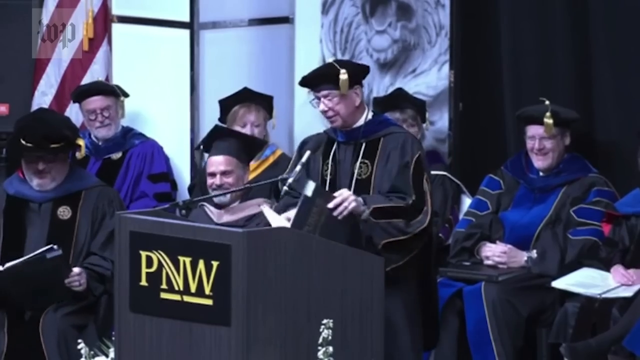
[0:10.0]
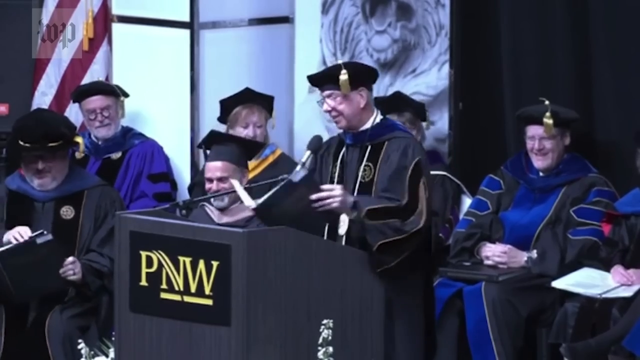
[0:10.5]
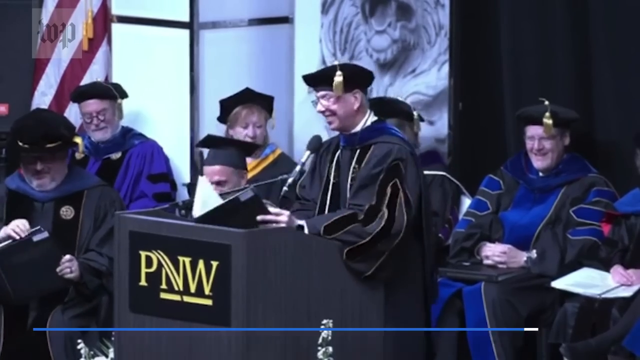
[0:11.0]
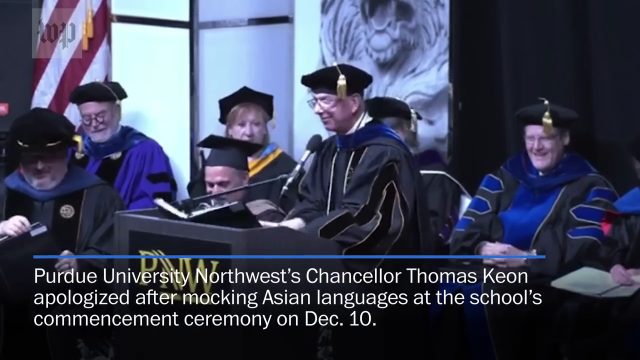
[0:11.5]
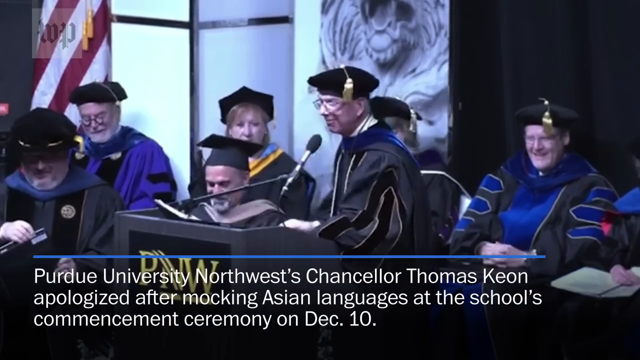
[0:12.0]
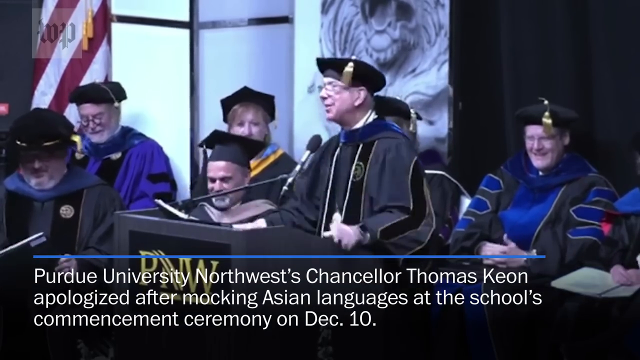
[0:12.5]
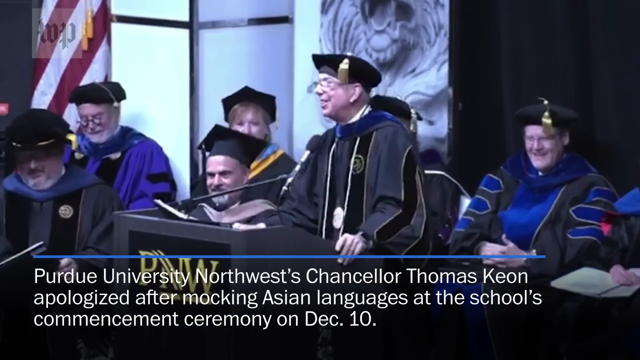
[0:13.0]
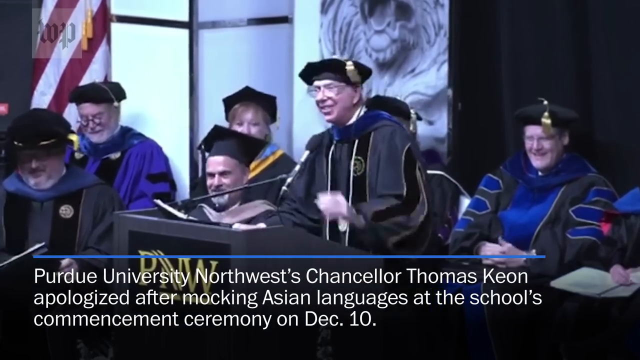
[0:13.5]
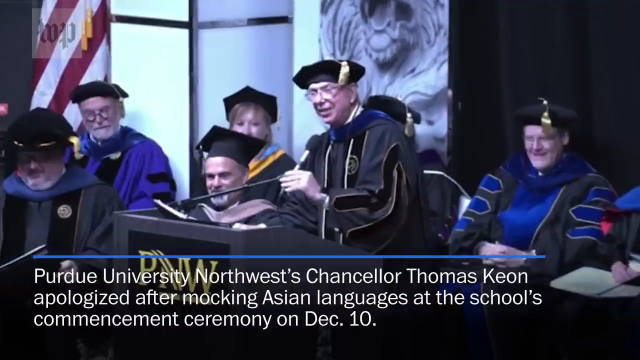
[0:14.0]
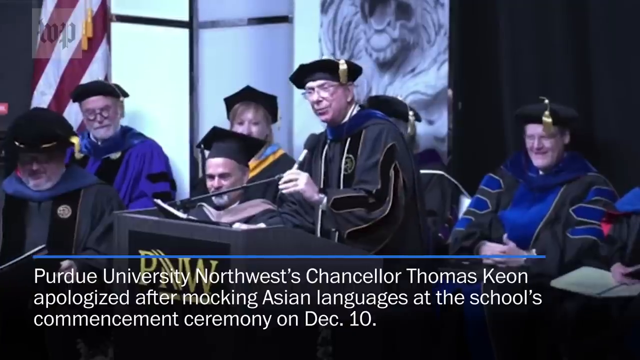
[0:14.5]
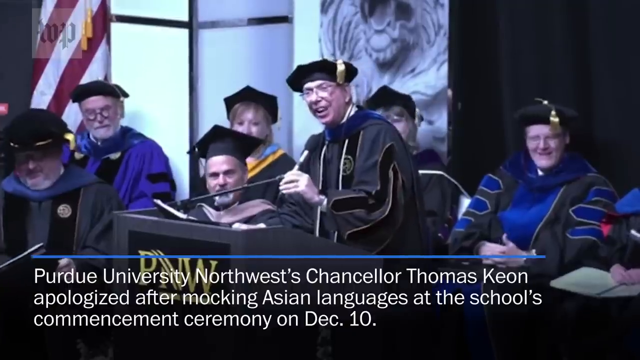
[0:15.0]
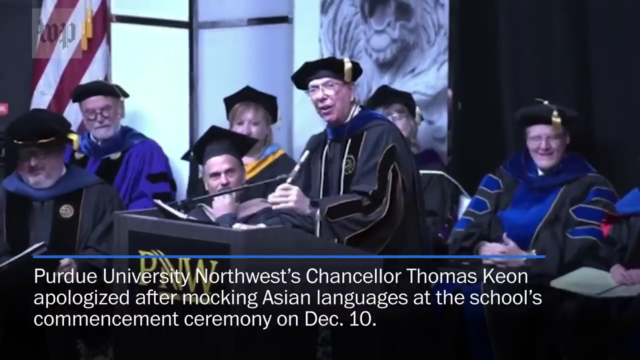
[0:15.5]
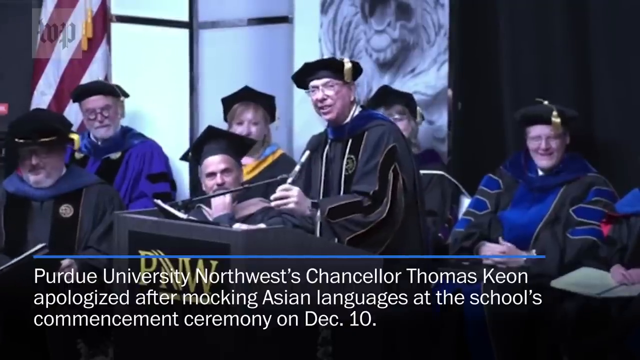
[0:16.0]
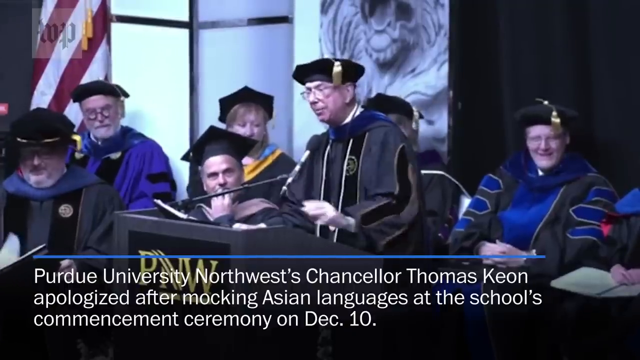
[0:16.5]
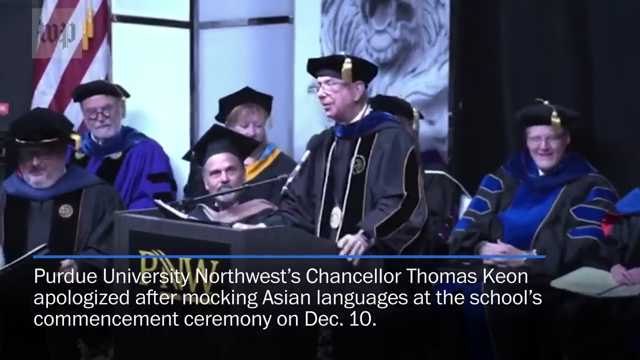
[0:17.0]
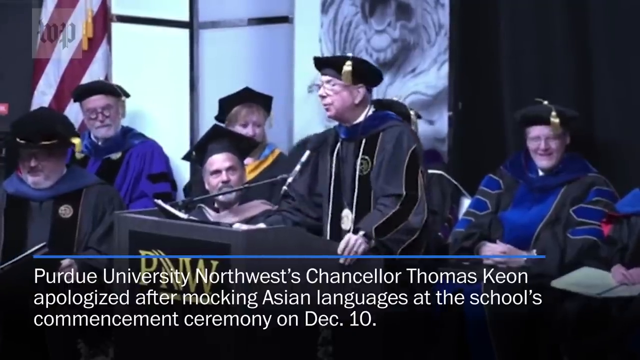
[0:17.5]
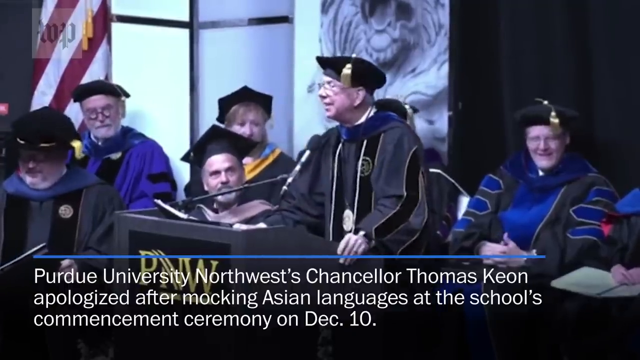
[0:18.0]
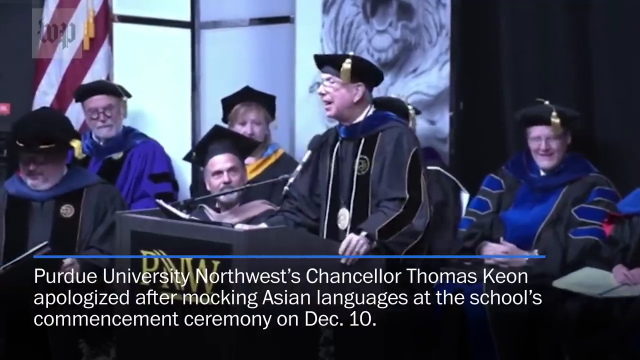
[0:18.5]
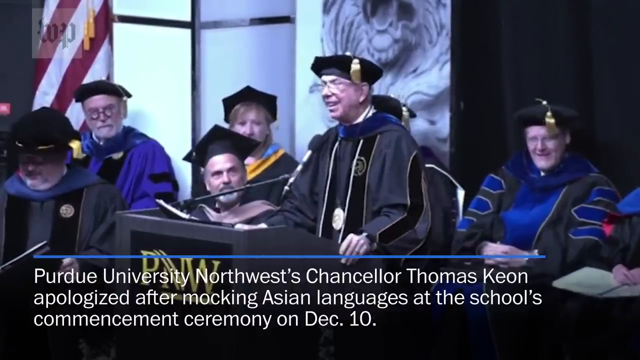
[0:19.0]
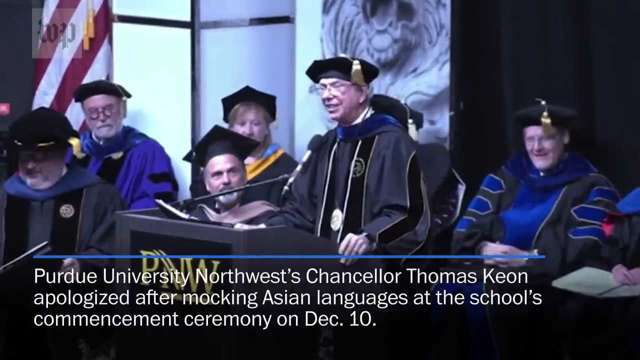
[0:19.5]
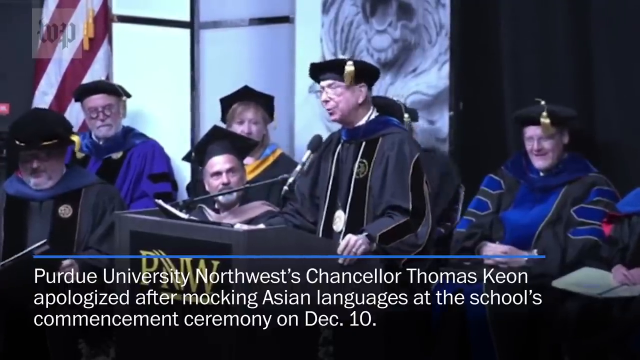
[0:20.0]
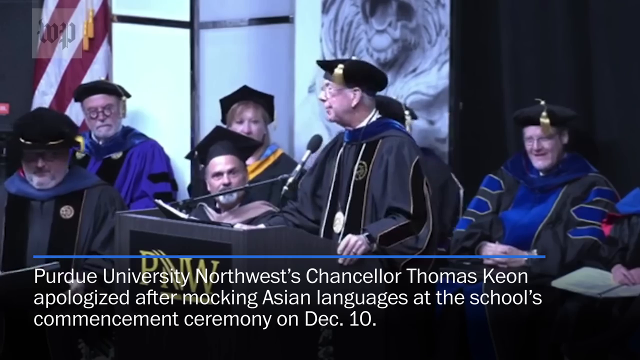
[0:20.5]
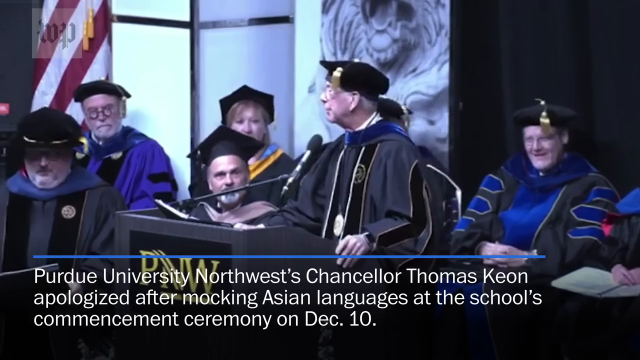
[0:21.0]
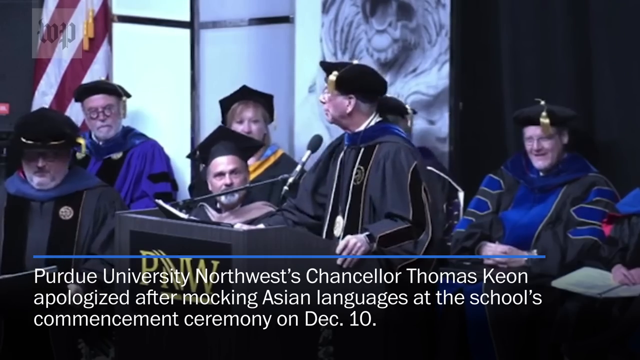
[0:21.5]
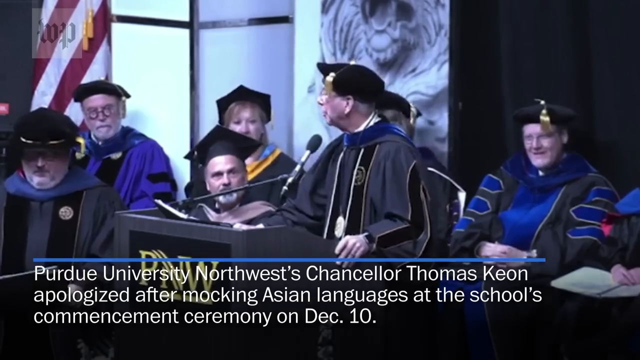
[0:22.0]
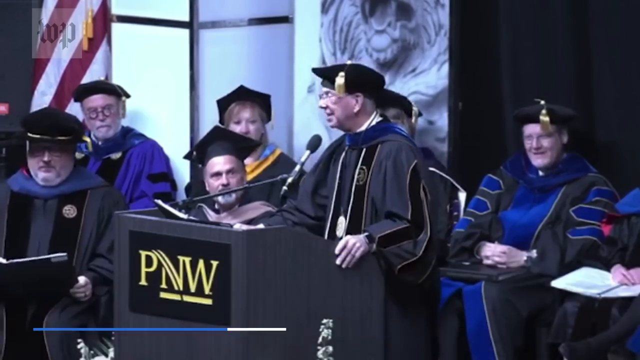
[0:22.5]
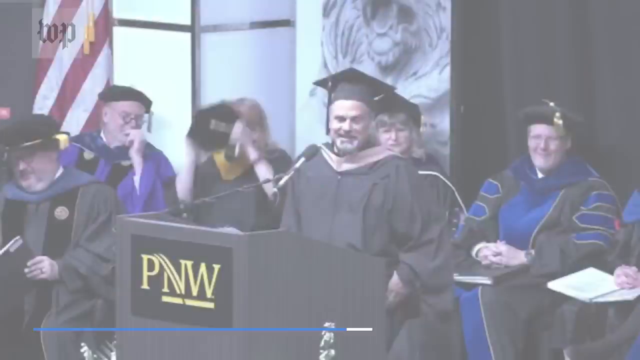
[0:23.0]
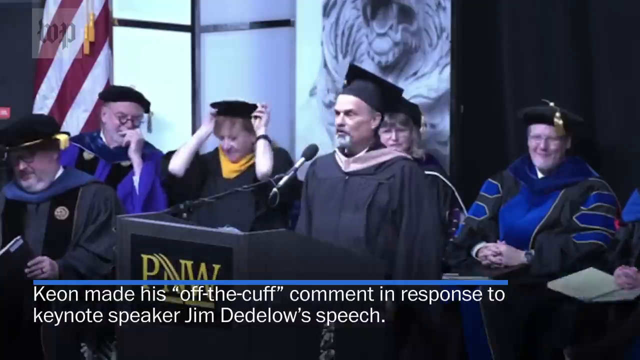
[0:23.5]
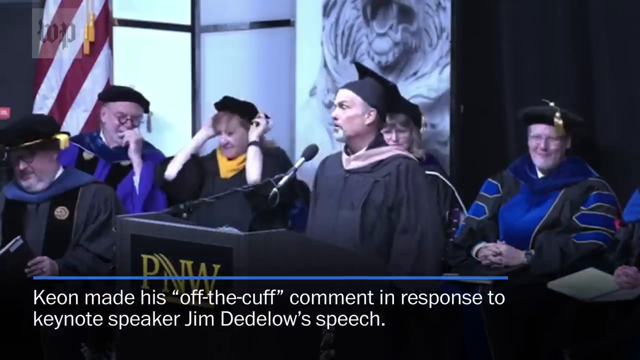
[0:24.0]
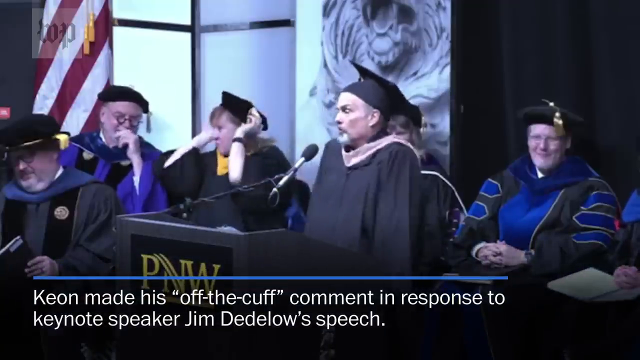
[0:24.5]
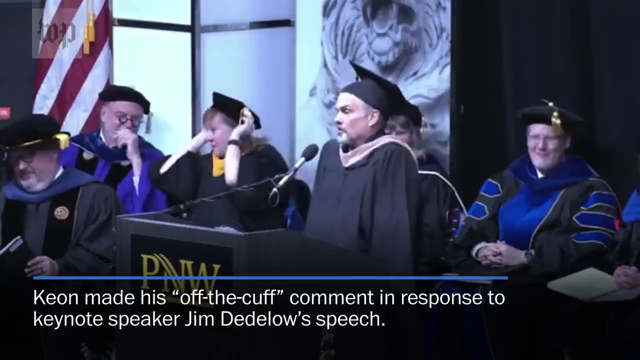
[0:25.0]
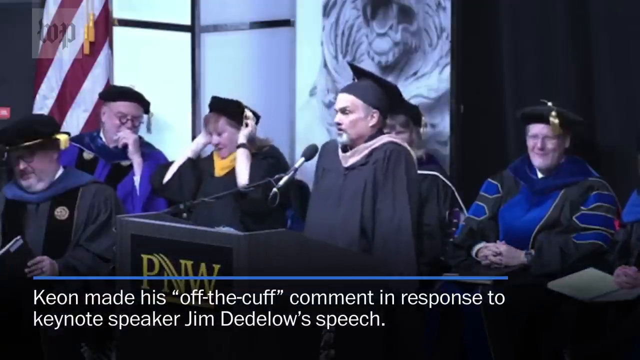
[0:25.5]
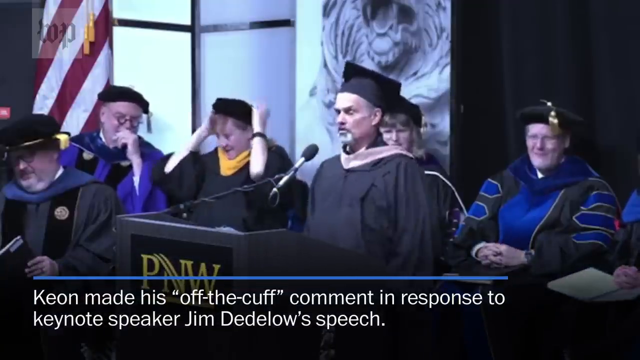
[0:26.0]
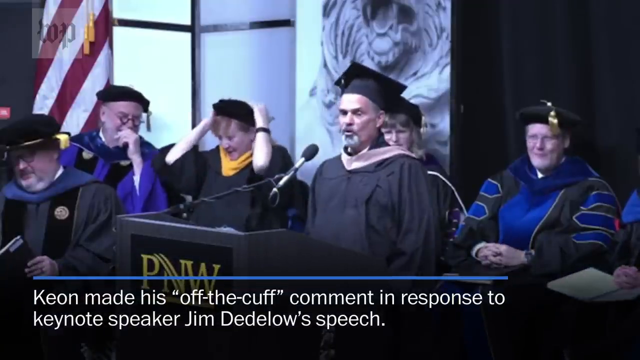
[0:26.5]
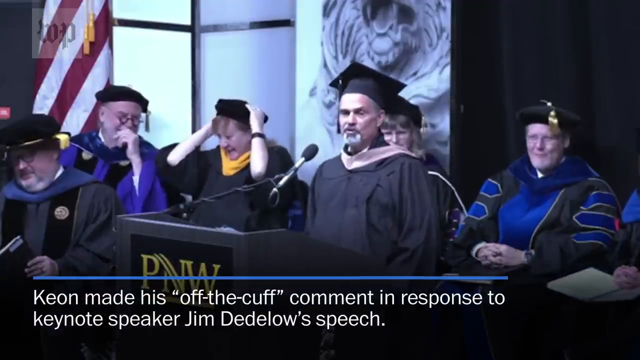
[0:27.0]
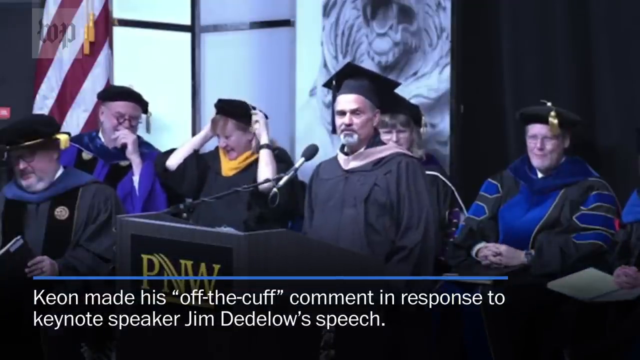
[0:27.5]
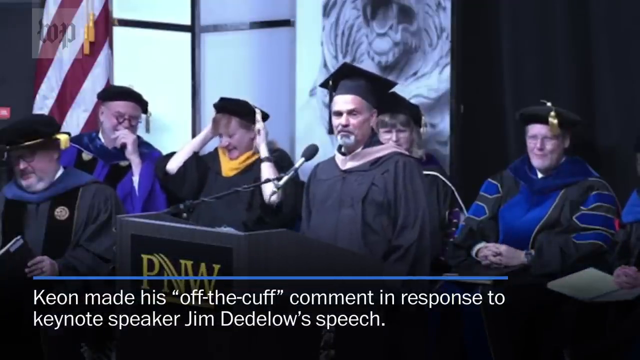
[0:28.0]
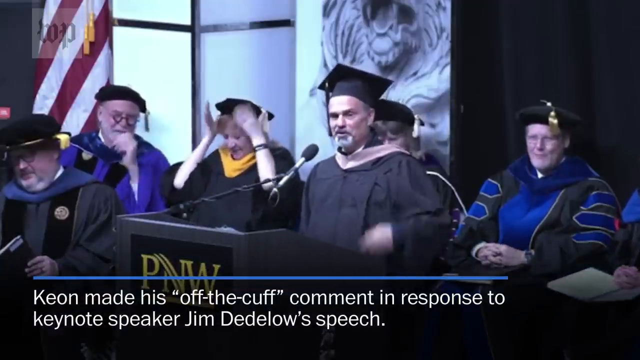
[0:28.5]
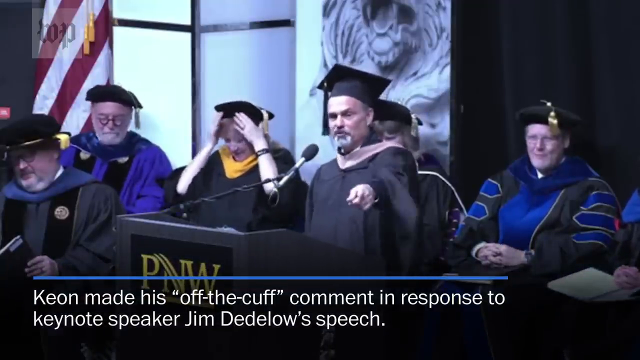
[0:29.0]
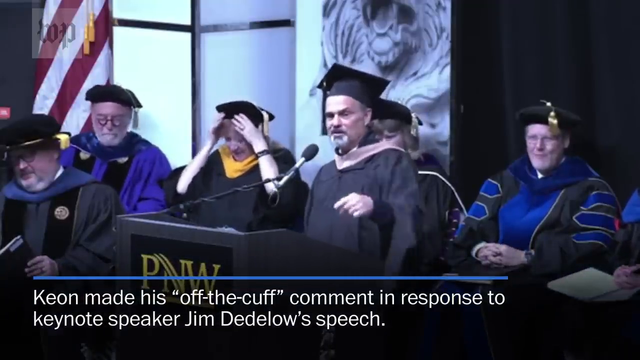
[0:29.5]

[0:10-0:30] The shot is zoomed in on the keynote speaker, who wears a black gown with a black scarf around his neck. Text at the bottom of the screen reads "Purdue University Northwest Chancellor Thomas Keon apologized after mocking Asian languages at the school's commencement ceremony on December 10th." A blue line runs above the text. The scene then switches to a different man at the podium, in a black gown with a pink scarf and with a black and white beard. The text at the bottom now reads "Keon made his off-the-cuff comment in response to keynote speaker Jim Dedelows' speech." Behind him are multiple people in various styles of gown, generally black, purple, or purple and black. The Washington Post logo is in the left-hand corner of the screen. In the background are one screen with a lion on it and an American flag, and the podium says "PNW."